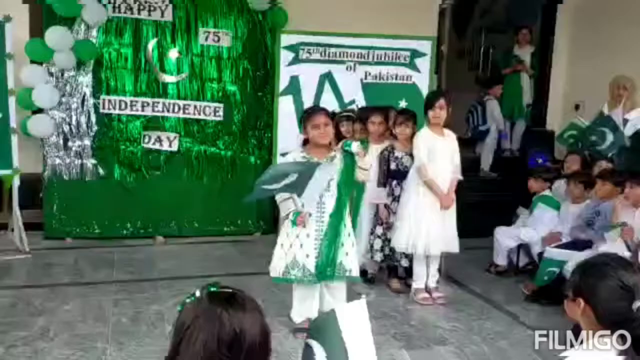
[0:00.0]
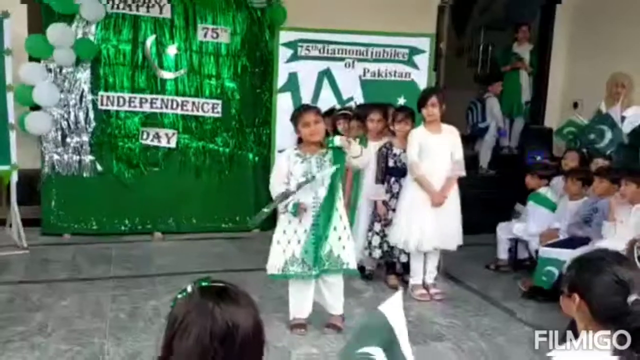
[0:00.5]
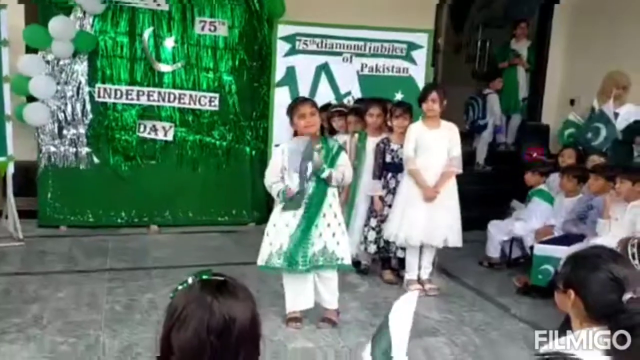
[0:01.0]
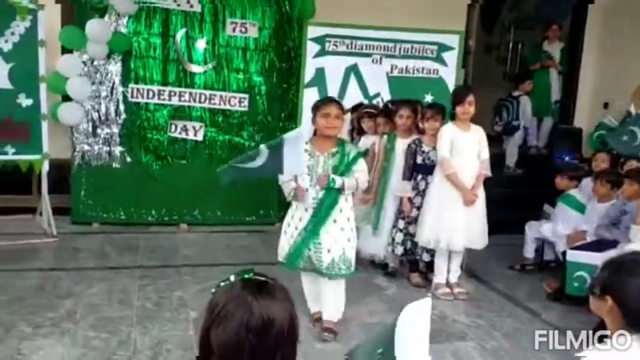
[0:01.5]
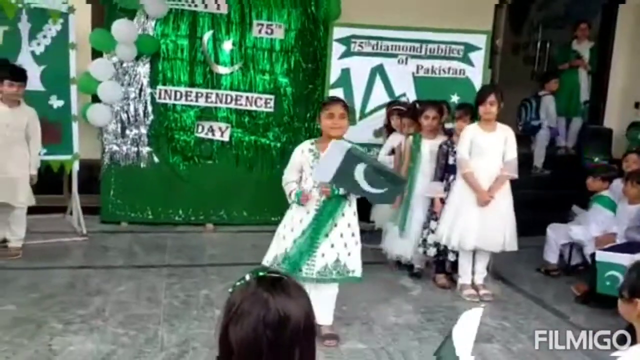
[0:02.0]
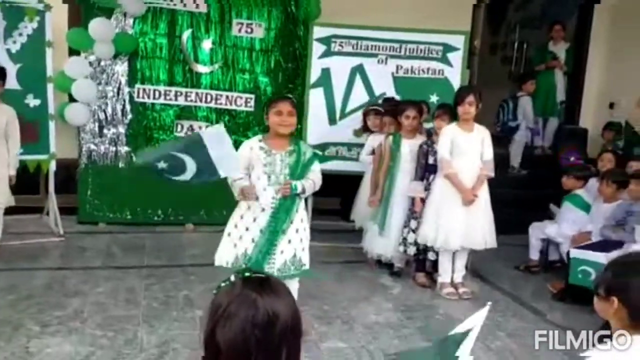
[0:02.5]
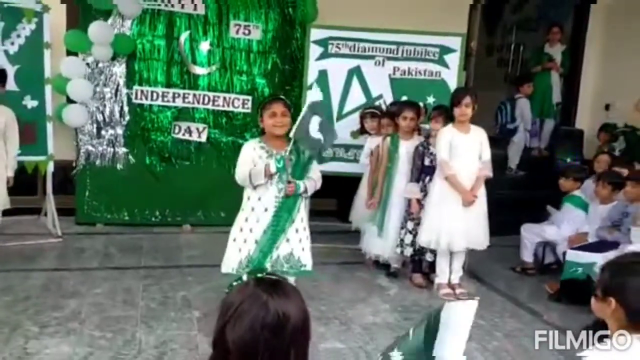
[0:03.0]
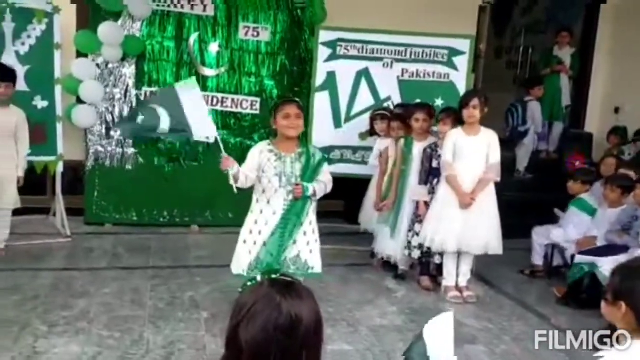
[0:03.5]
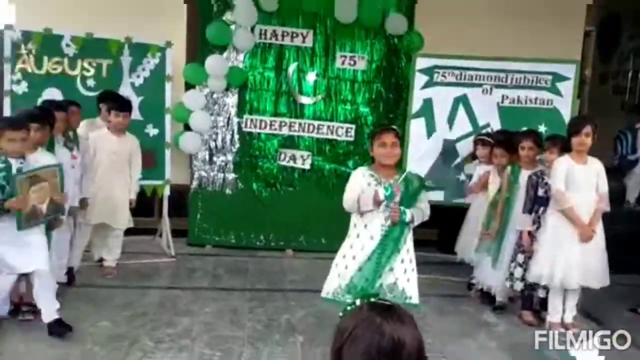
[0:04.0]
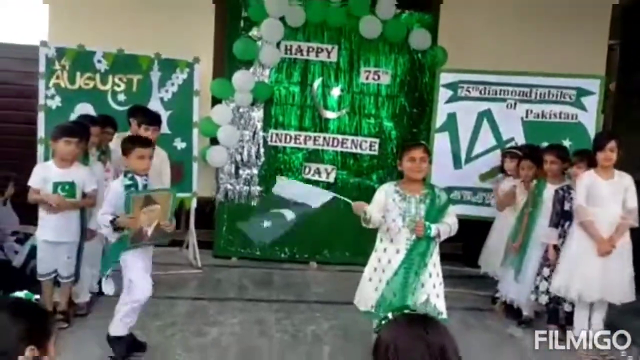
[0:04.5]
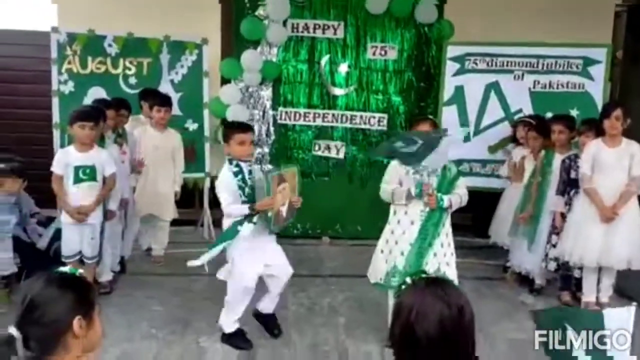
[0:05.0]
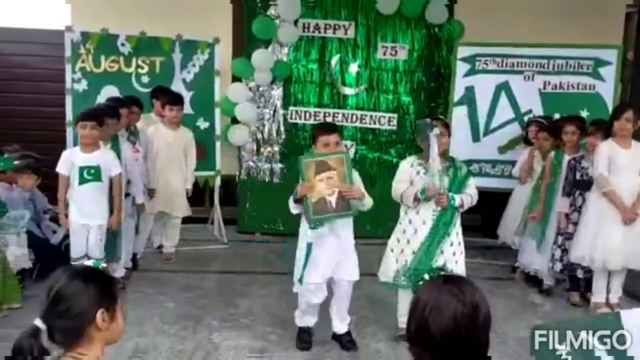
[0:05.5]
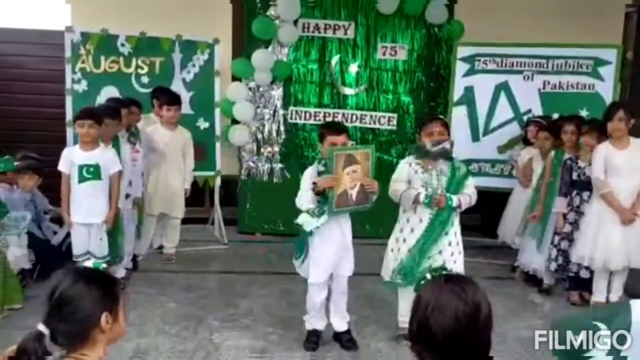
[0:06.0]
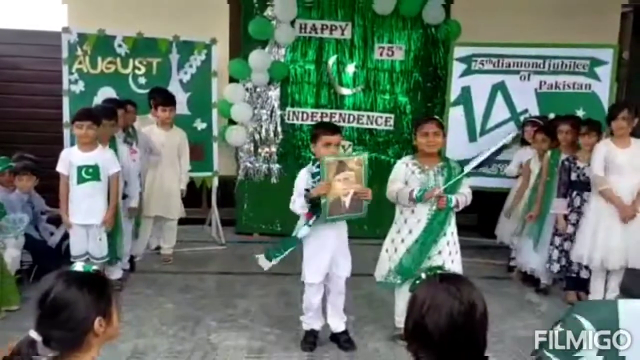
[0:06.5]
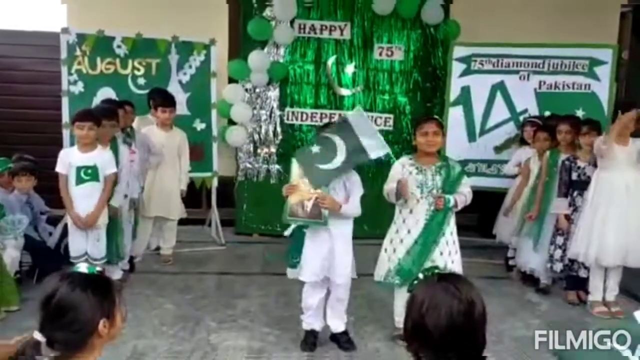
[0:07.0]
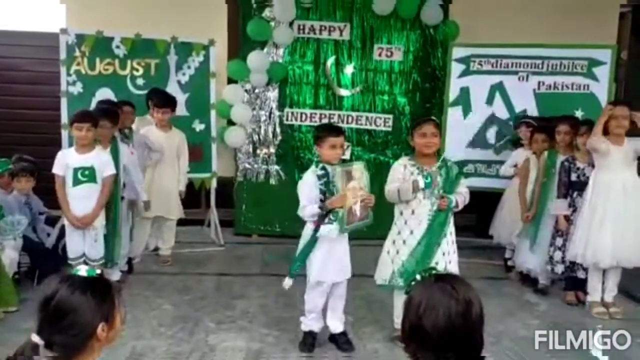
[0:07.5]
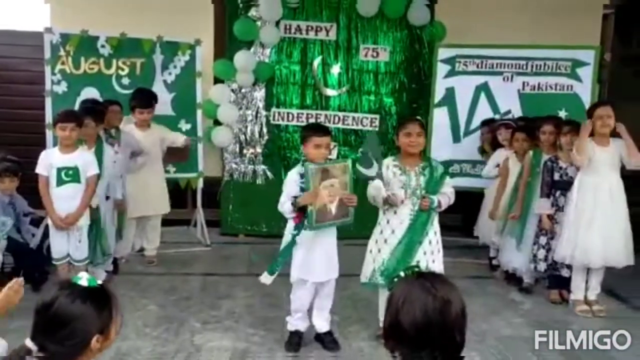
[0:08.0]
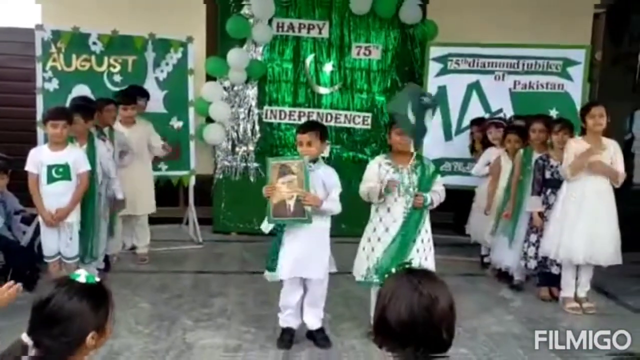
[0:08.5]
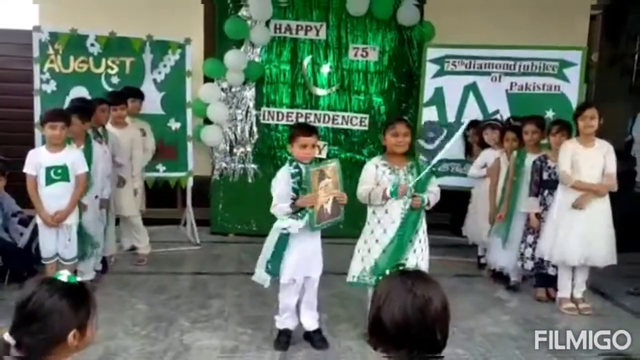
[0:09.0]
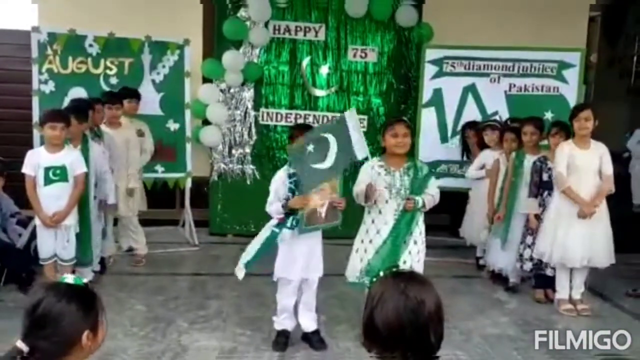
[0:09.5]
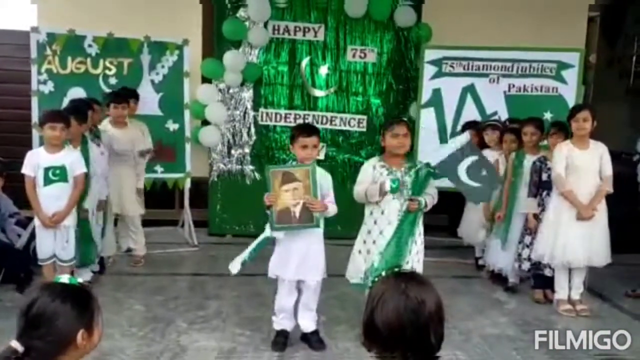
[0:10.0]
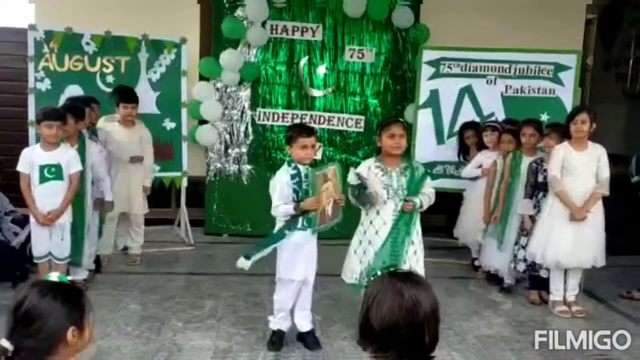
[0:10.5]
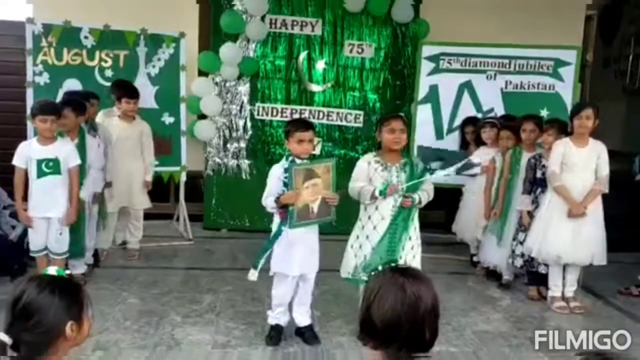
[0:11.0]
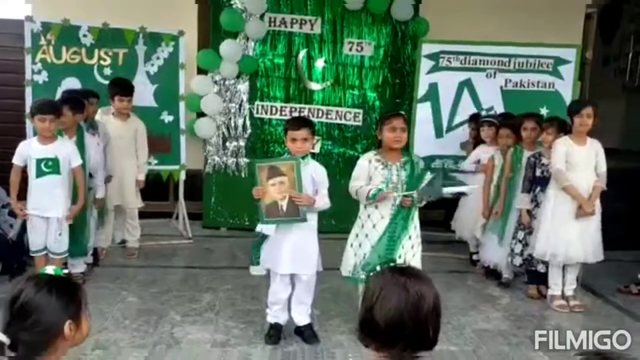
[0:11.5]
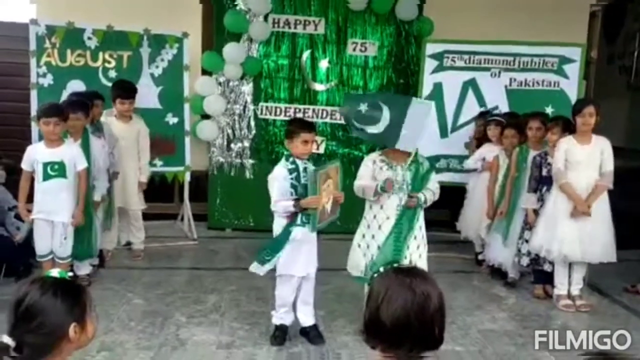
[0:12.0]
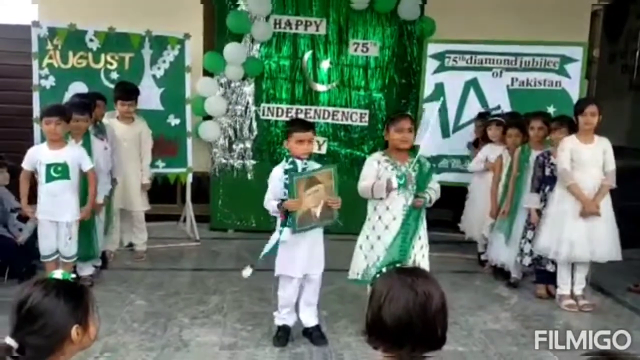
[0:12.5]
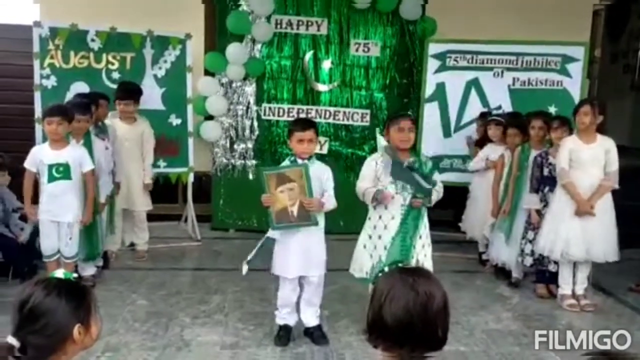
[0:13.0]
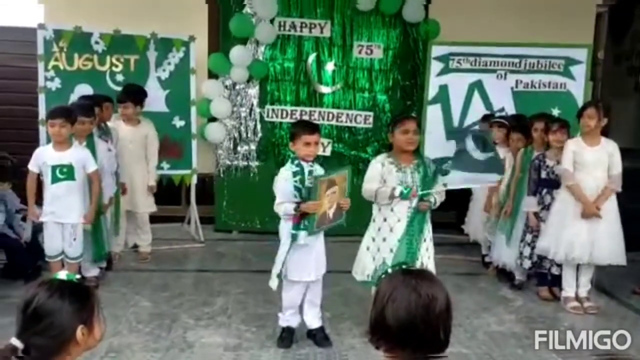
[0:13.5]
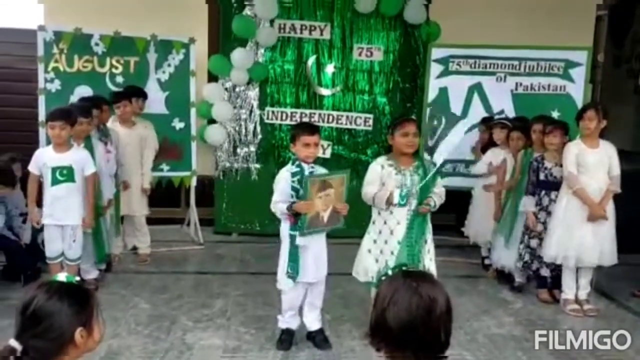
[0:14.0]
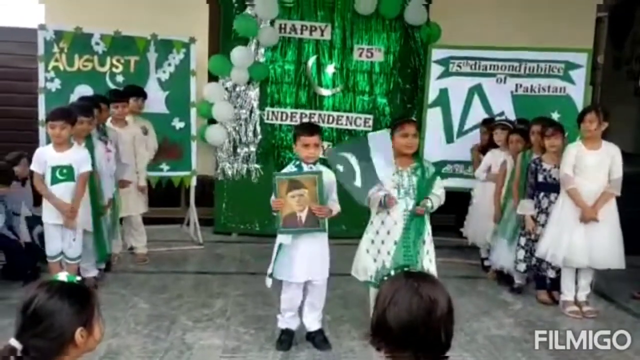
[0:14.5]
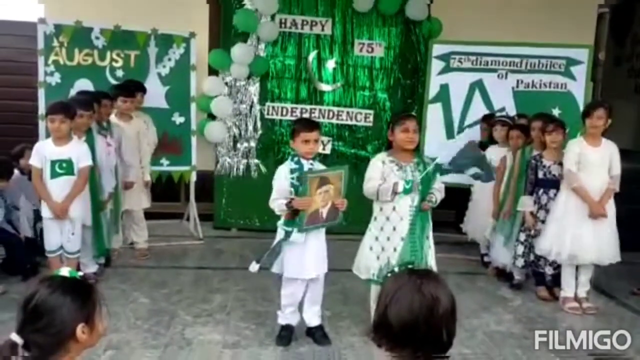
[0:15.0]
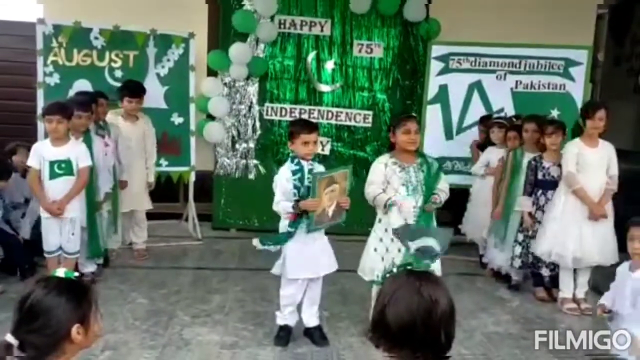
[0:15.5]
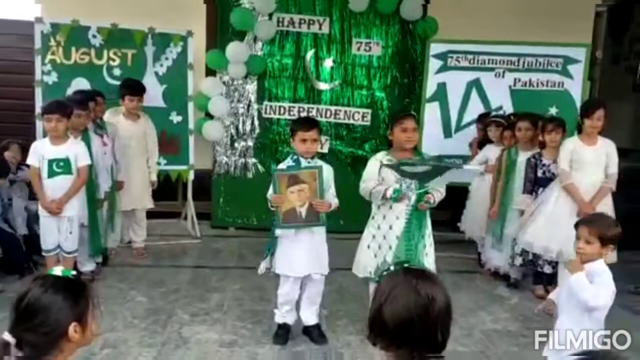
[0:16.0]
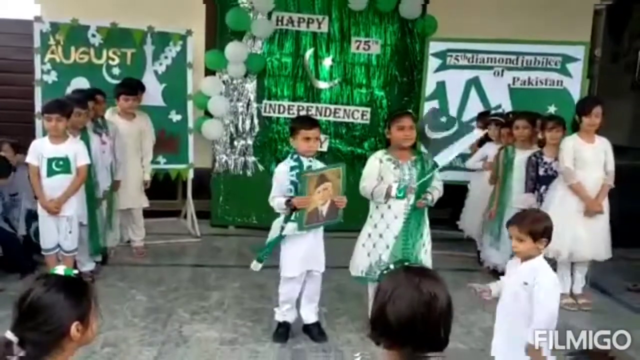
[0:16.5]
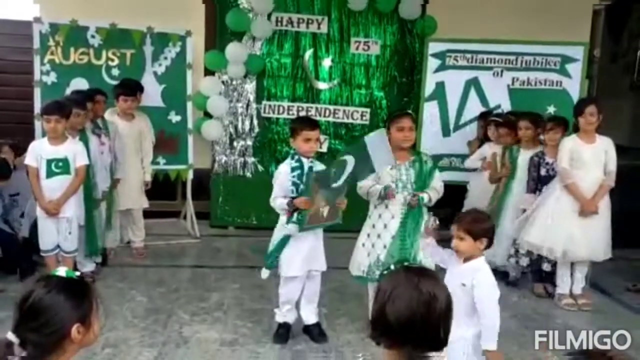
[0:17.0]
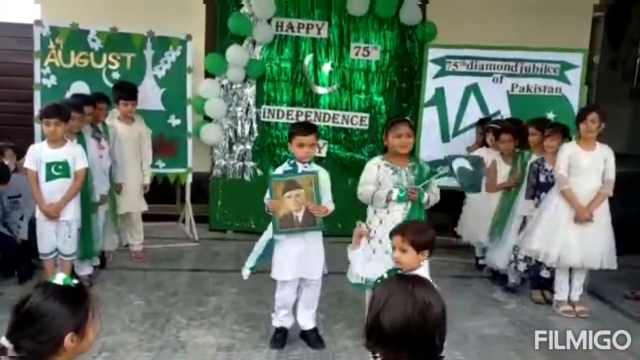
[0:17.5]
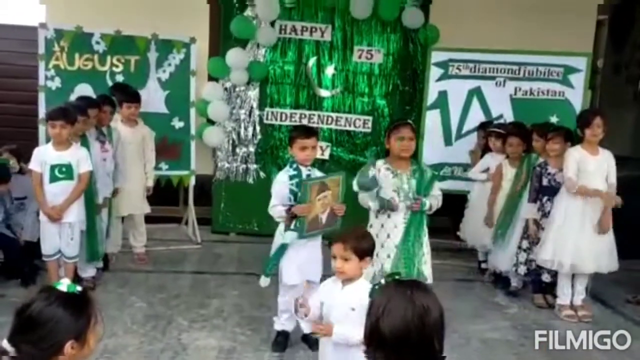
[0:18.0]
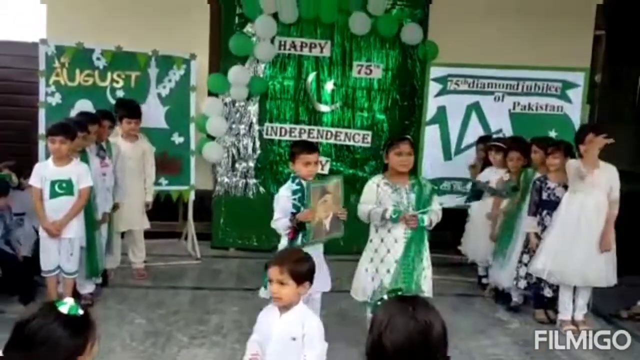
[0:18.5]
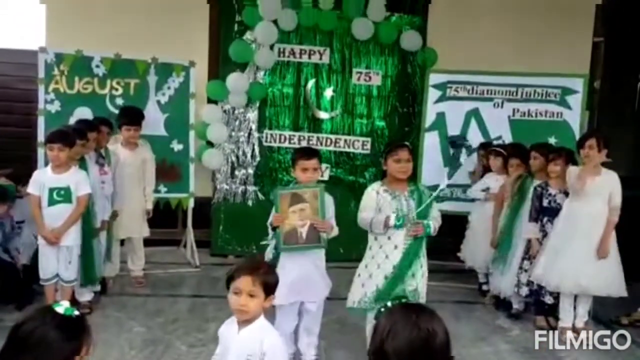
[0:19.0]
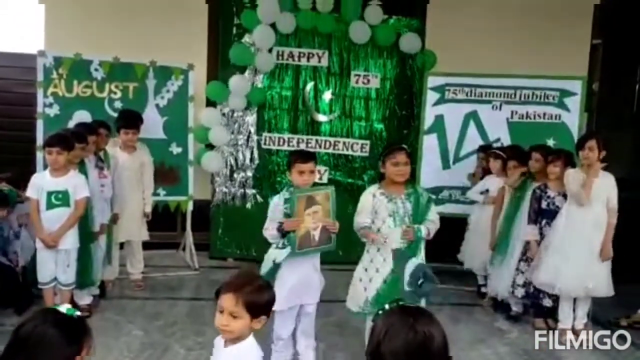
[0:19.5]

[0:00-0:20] What looks like a school of some kind is celebrating Pakistani Independence Day. On-screen text reads "75th Diamond Jubilee of Pakistan." To the left of that is a giant green foil stand with green and white balloons that says "Happy 75th Independence Day." A bunch of kids dressed in green and white dance around waving Pakistani flags. A girl up front waves a Pakistani flag, and a young boy to her left holds up a picture of an unidentified person, moving it back and forth. There is a row of boys on the left-hand side and a row of girls on the right-hand side. To the left of the big foil stand is a green and white paper or cardboard stand; the only visible word on it is "August."